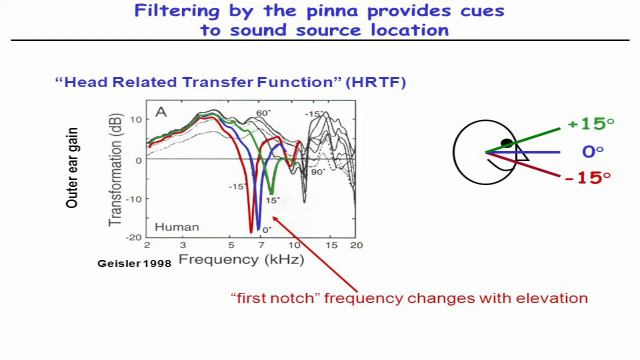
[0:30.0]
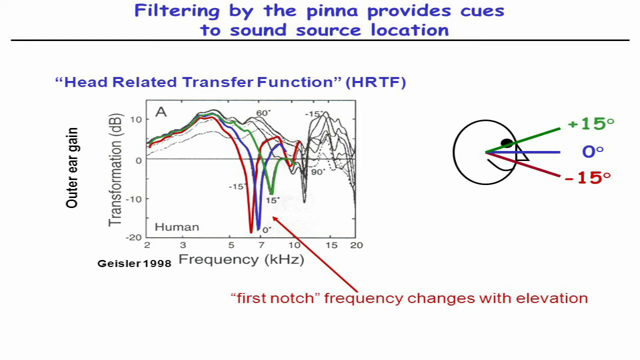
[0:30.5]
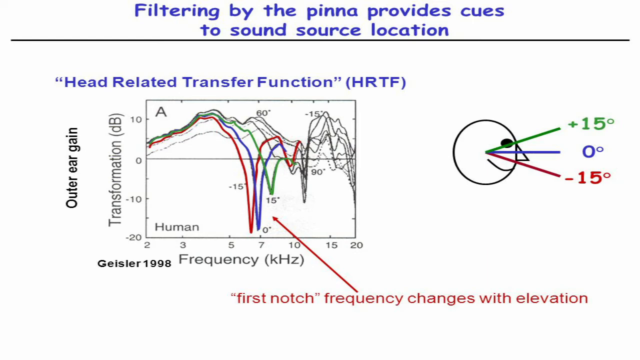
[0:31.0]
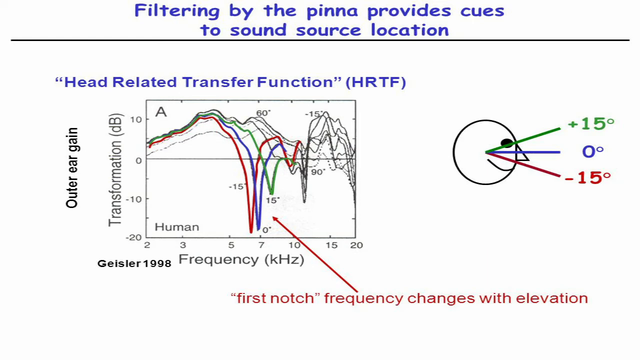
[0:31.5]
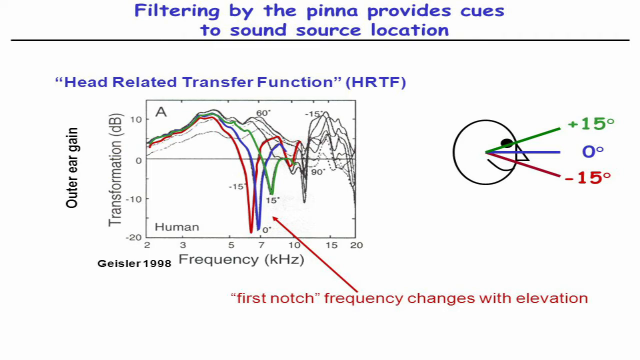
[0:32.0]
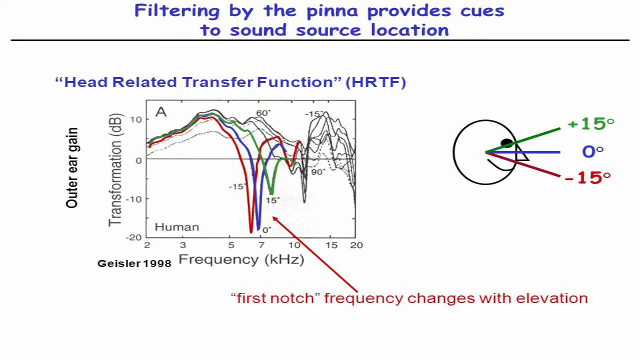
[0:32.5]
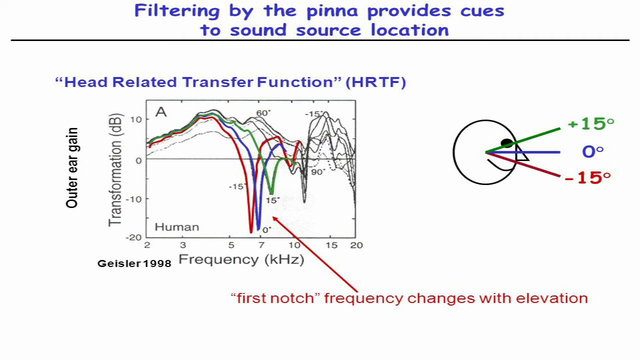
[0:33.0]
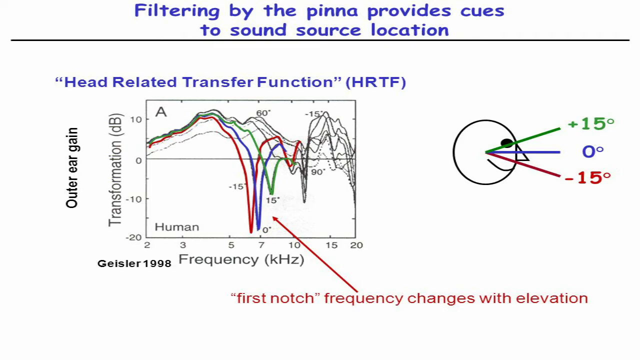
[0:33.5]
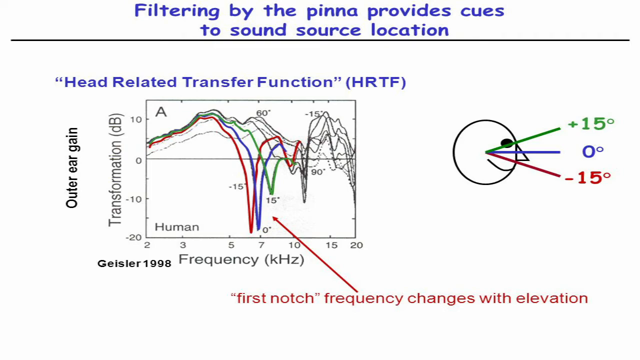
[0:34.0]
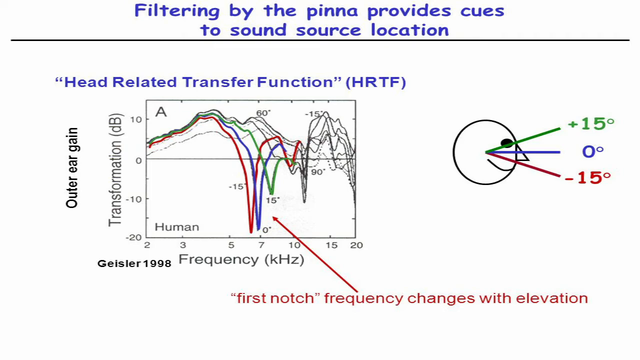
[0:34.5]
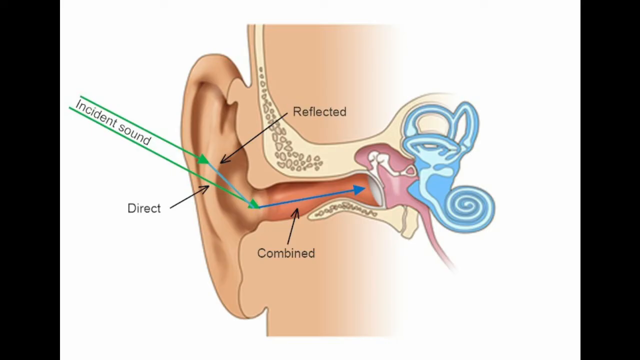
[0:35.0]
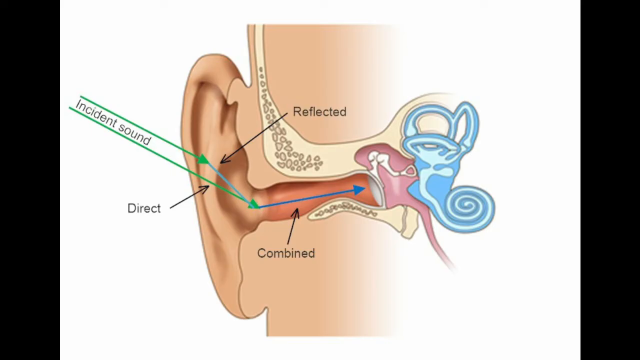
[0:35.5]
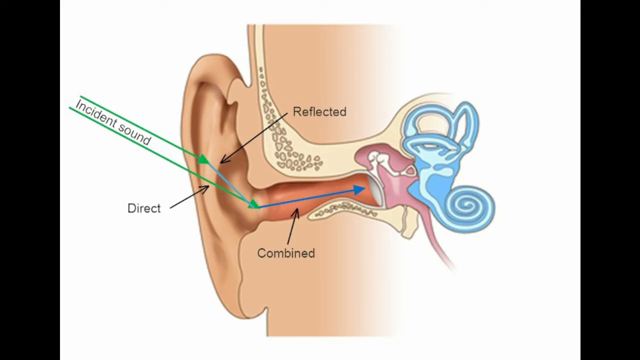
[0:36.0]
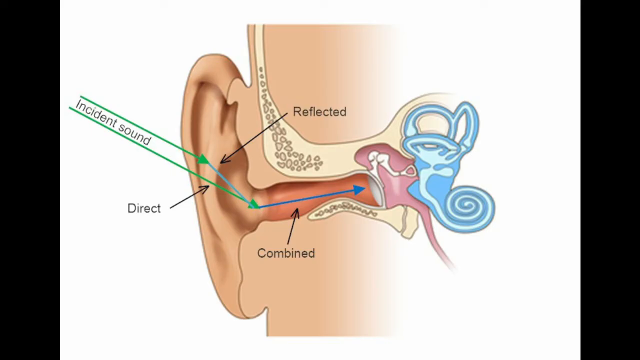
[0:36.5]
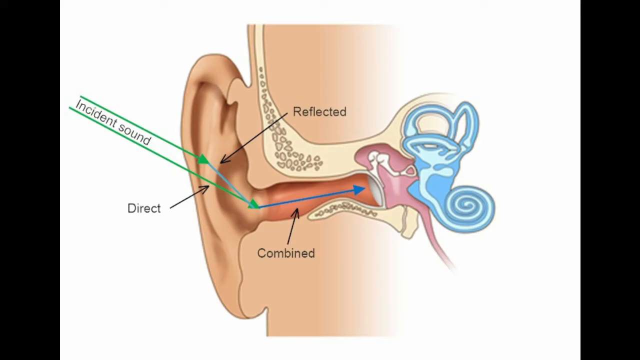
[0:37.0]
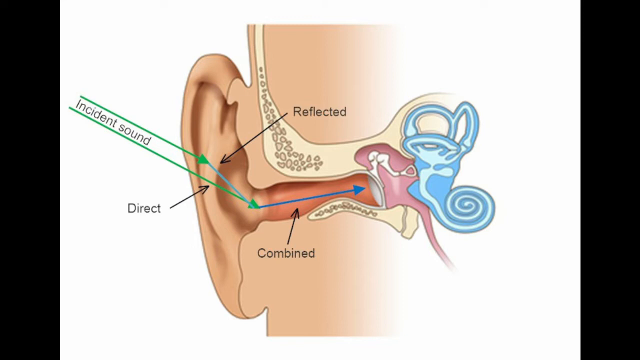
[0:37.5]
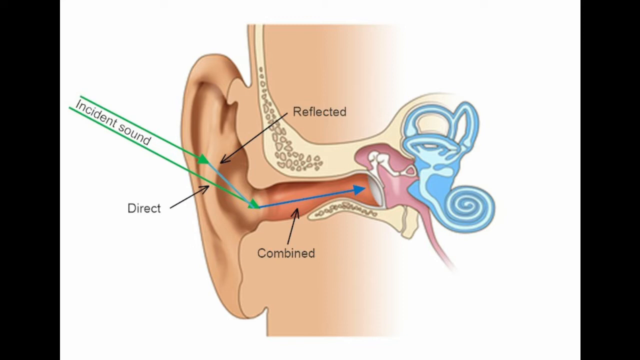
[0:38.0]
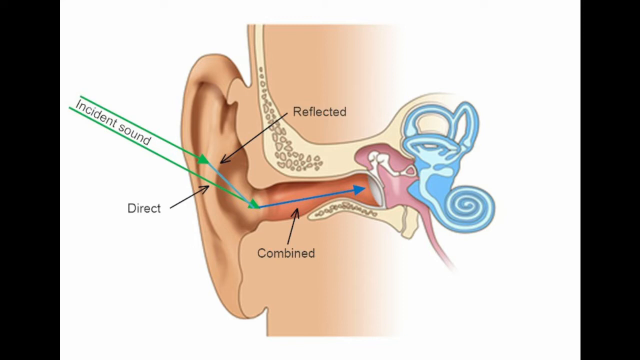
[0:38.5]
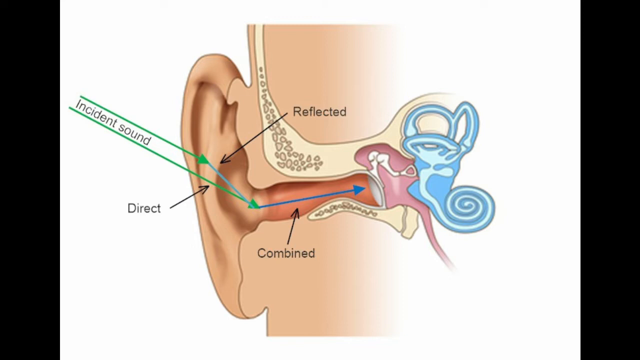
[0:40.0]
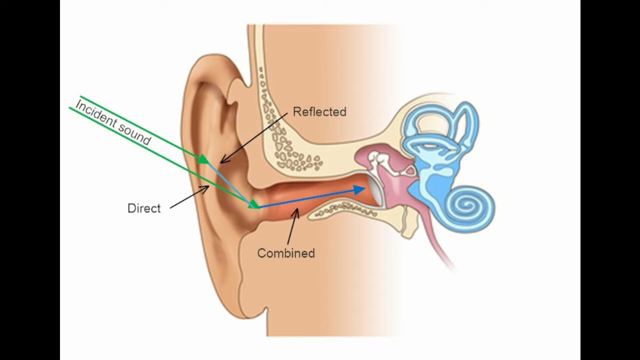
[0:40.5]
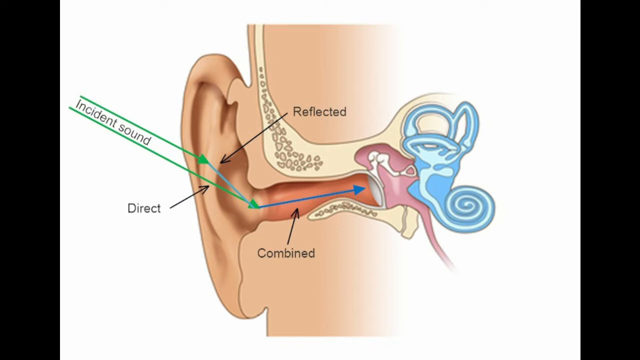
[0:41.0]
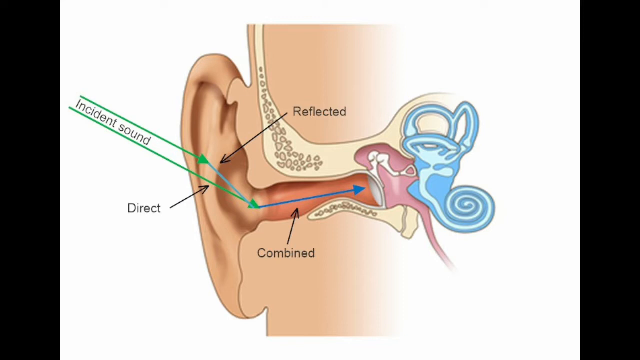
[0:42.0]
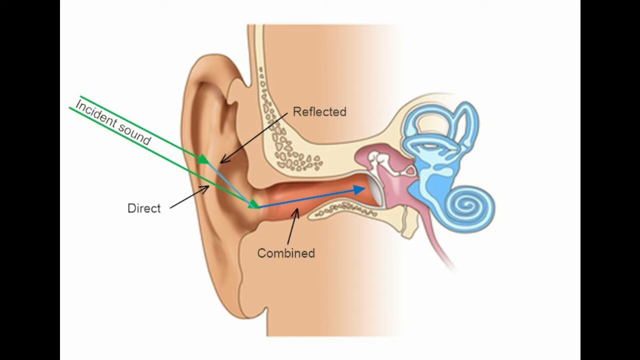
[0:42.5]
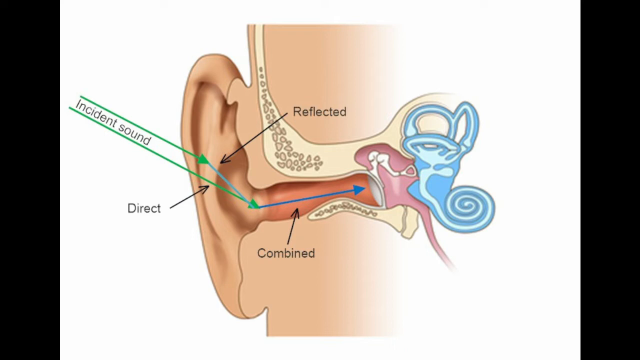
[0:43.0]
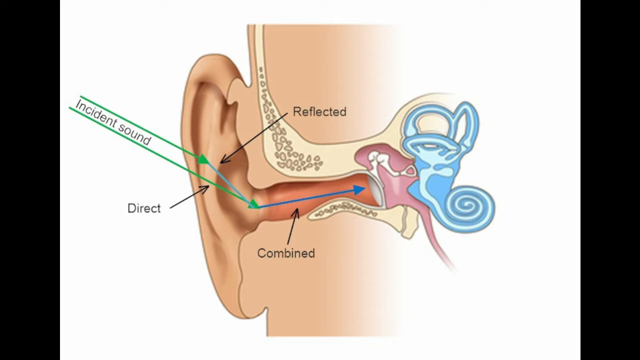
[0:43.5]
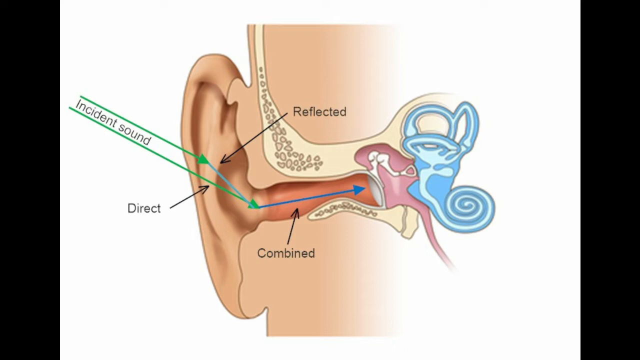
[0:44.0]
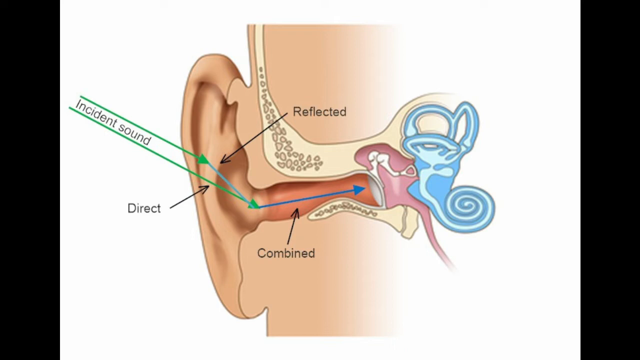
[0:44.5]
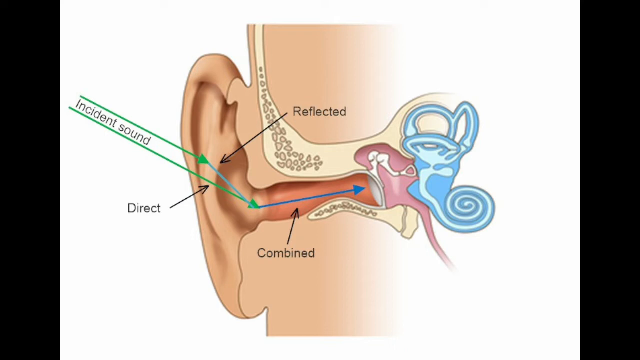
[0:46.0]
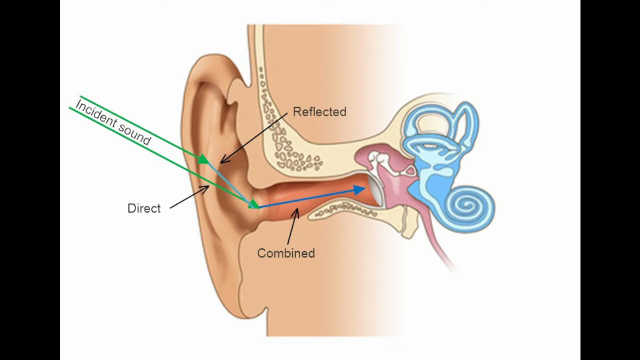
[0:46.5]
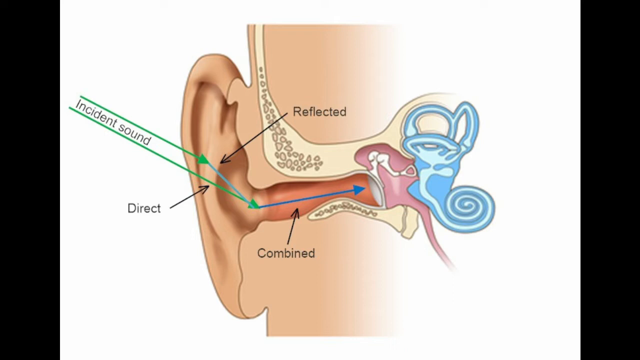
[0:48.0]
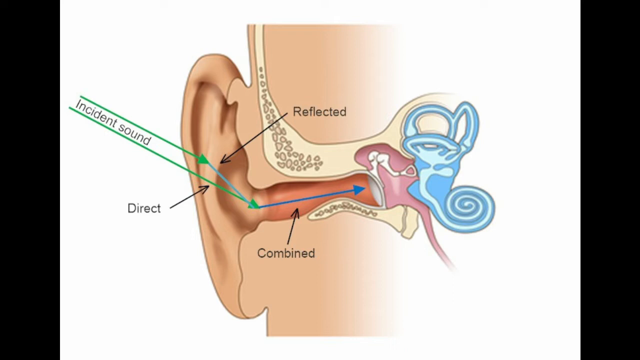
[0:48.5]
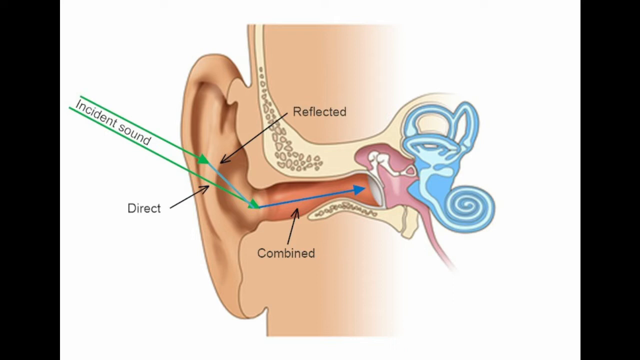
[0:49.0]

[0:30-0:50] A white background shows blue, black and red text reading "filtering by the pinna provides cues to sound source location, head-related transfer function HRTF," along with black text reading "outer ear gain transformation DB Geissler 1998 frequency KHZ." A graph has green, red and blue lines on it and is numbered on the vertical and horizontal axes. Red text at the bottom reading "first notch frequency changes with elevation" points to the graph, and a little circle face has green, blue and red lines labeled "plus 15 degrees," "zero degrees," and "minus 15 degrees." The video then moves to another photo showing a person's face and some of the parts that make up a person's head next to the ear. Green arrows, as well as blue and black arrows, point to certain things, with black text reading "incident sound," "direct," "combined," and "reflected."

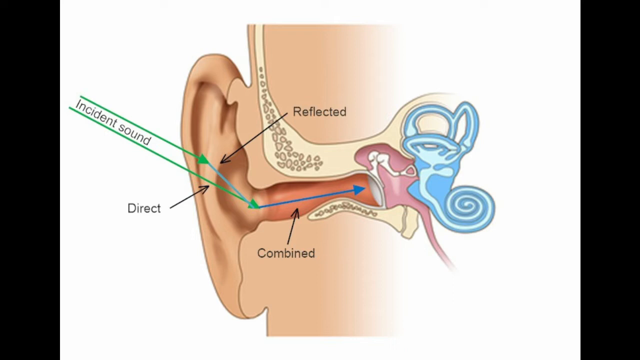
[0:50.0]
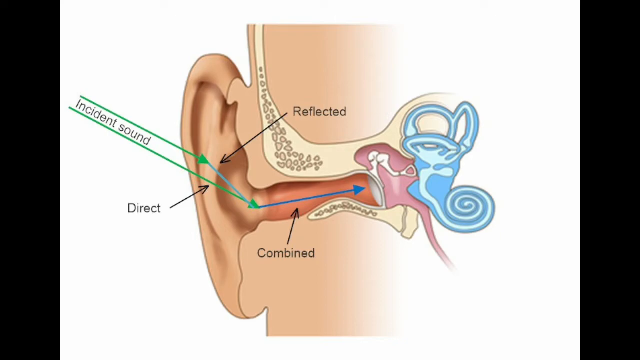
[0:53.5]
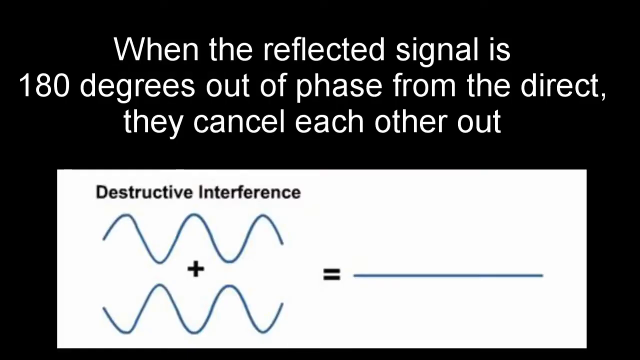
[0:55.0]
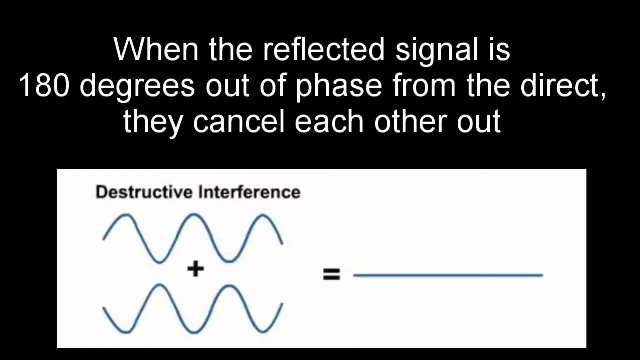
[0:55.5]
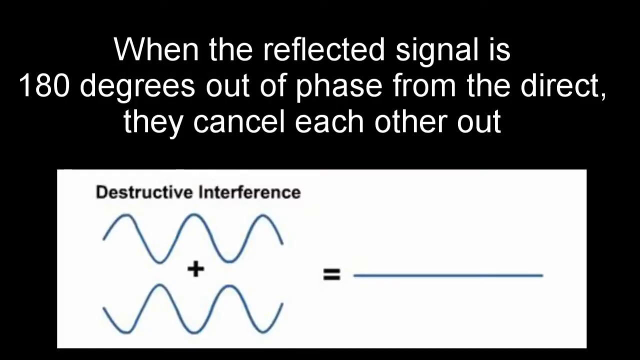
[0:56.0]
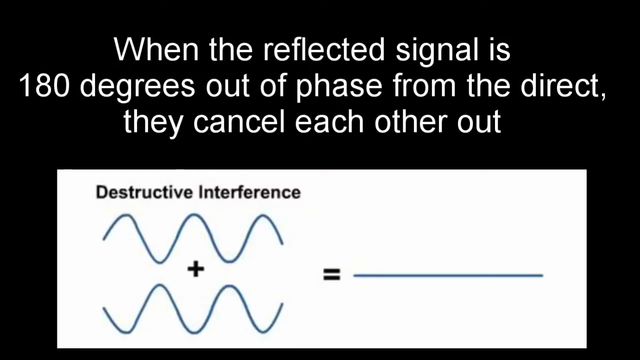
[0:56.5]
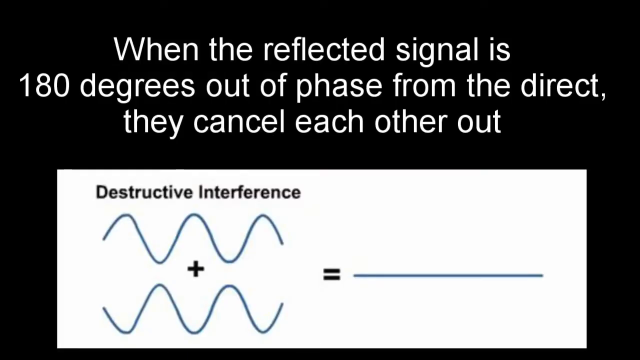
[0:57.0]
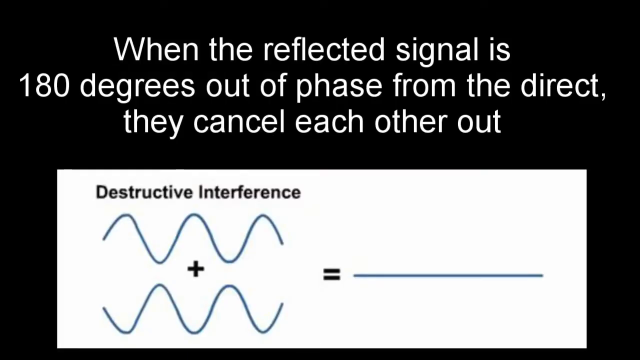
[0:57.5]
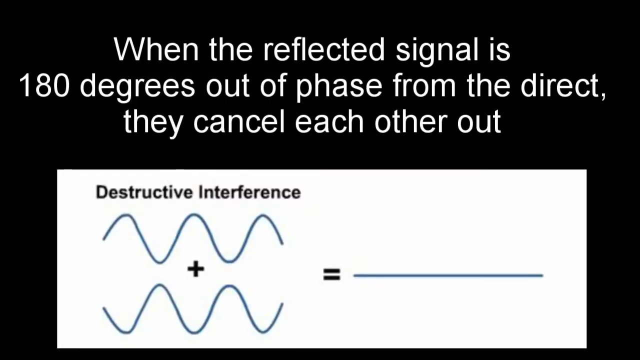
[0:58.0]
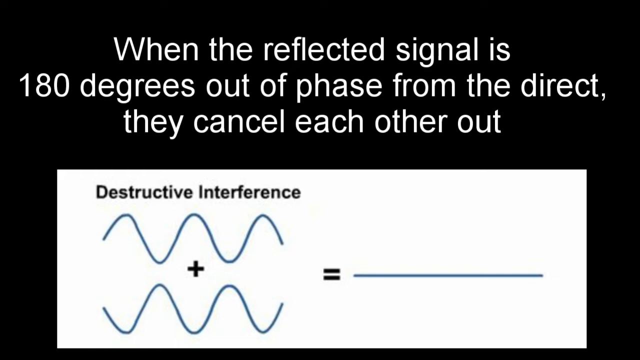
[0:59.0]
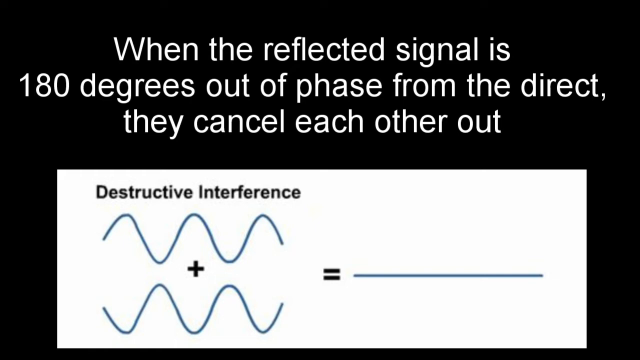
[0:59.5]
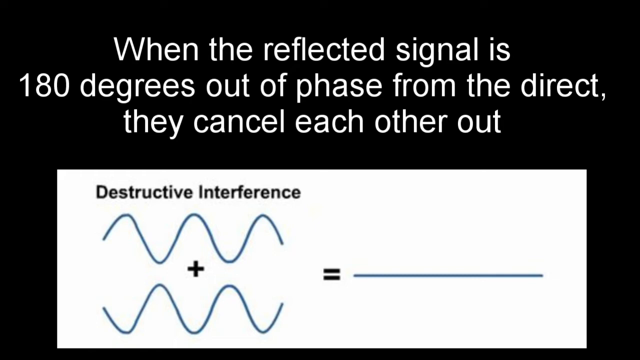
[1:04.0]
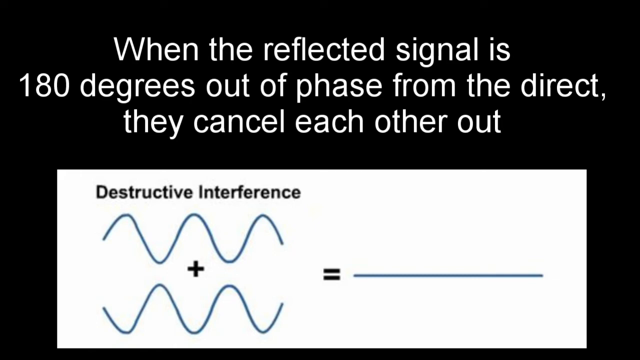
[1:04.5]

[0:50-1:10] An image shows a person's head and face; near the ear, black, green and blue arrows point to different parts of the face, with black text reading "incident sound," "direct," "reflected," and "combined." The video then goes to a black screen with white text reading "when the reflected signal is 180 degrees out of phase from the direct, they cancel each other out." A white rectangular box contains black text and blue squiggly lines, with the text "destructive interference." A plus symbol appears between the blue squiggly lines, followed by an equals sign and a very large blue line. The video then moves to a dark black screen and stays on it.